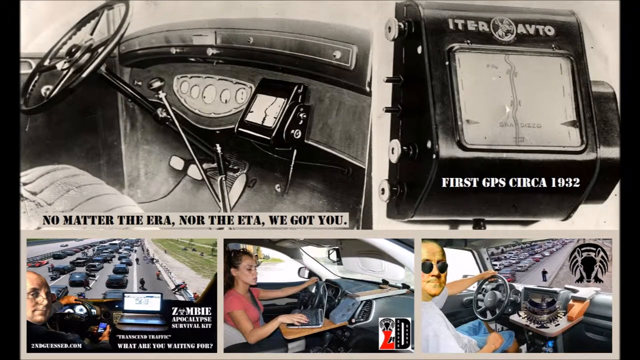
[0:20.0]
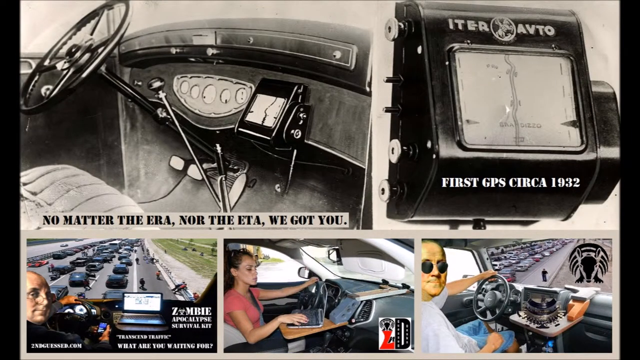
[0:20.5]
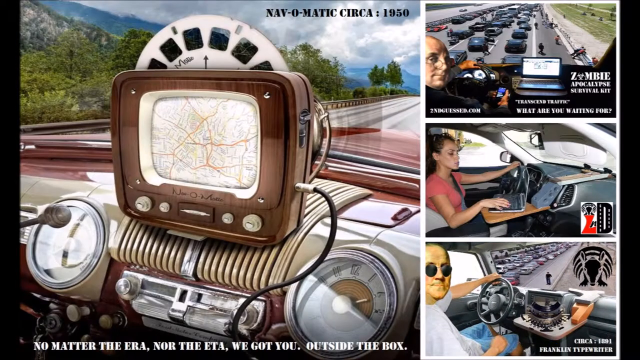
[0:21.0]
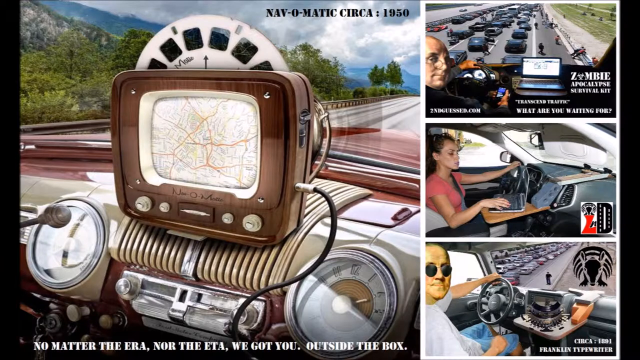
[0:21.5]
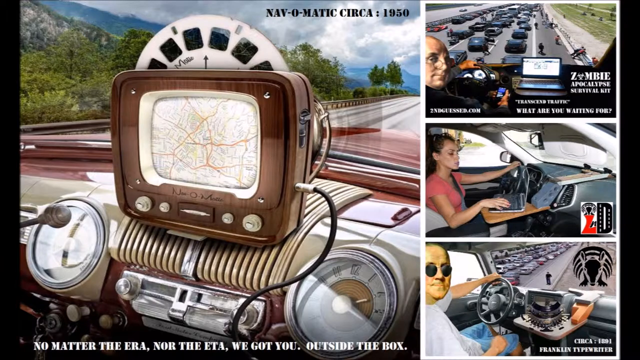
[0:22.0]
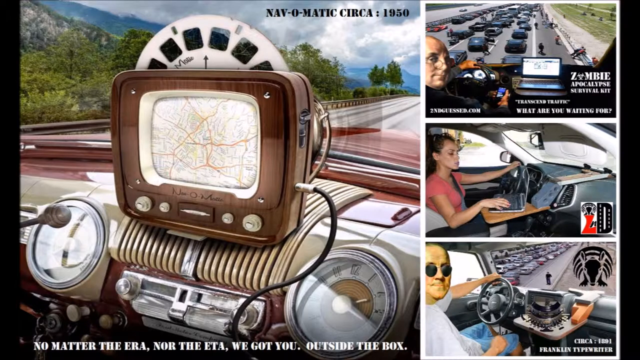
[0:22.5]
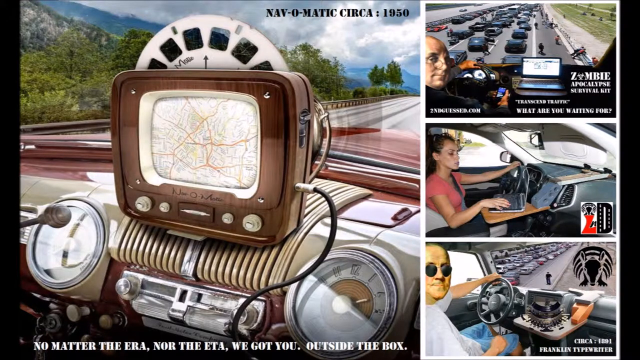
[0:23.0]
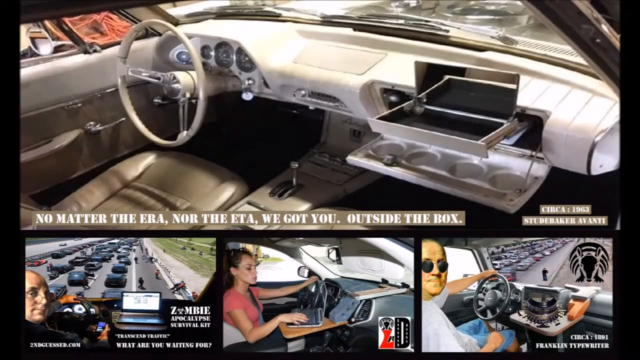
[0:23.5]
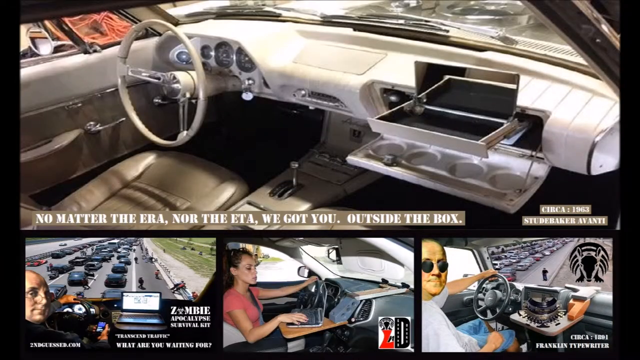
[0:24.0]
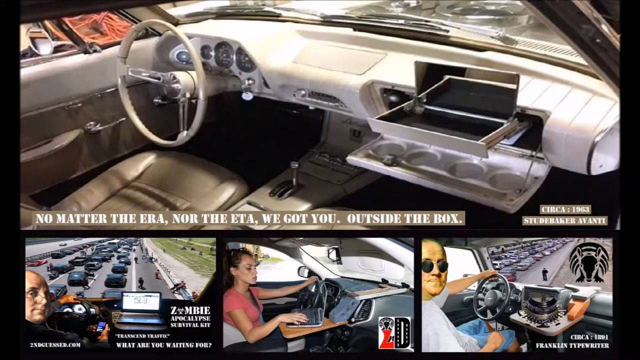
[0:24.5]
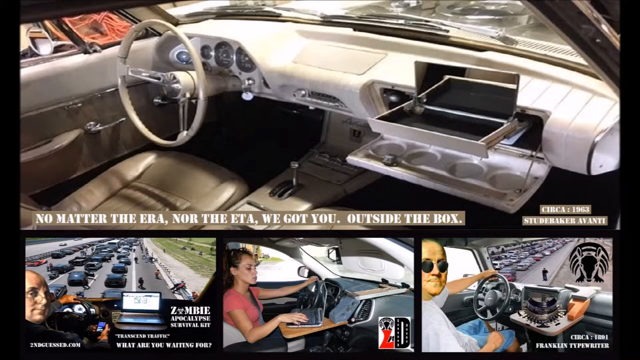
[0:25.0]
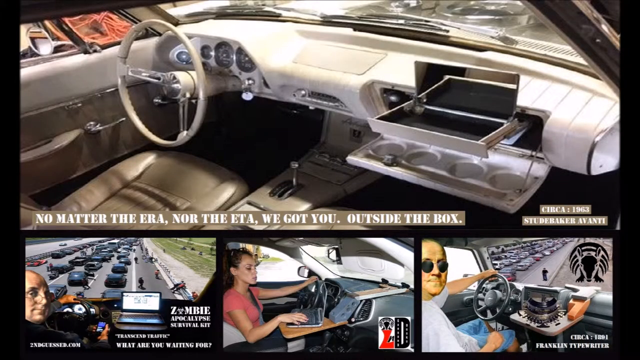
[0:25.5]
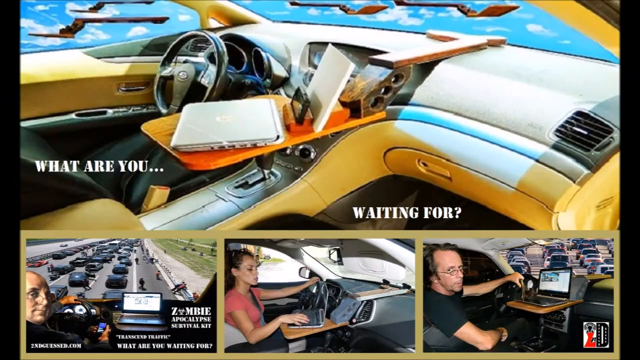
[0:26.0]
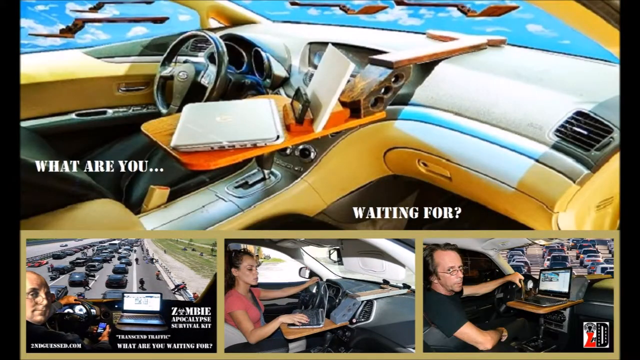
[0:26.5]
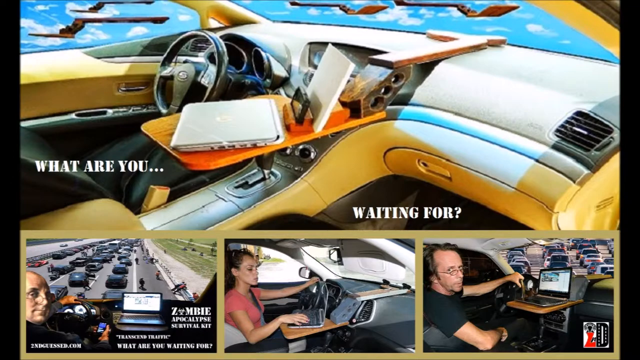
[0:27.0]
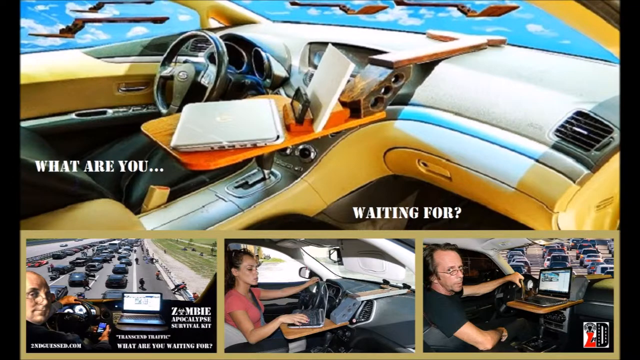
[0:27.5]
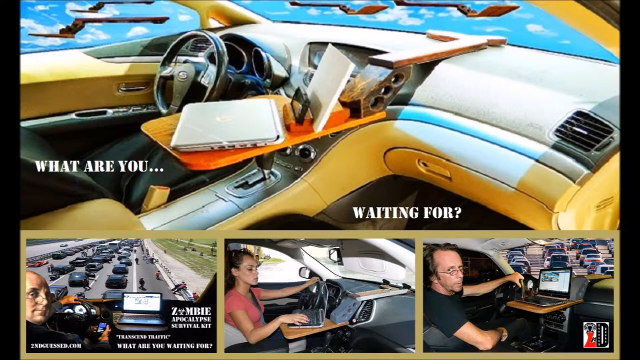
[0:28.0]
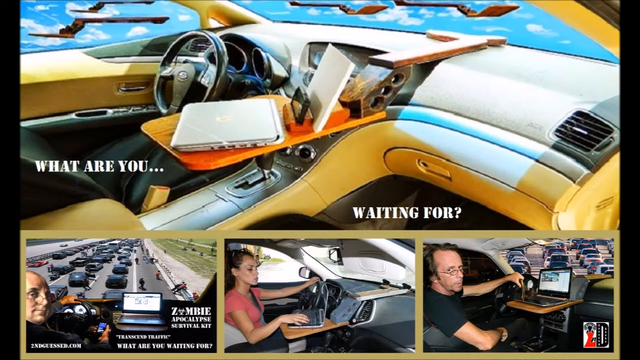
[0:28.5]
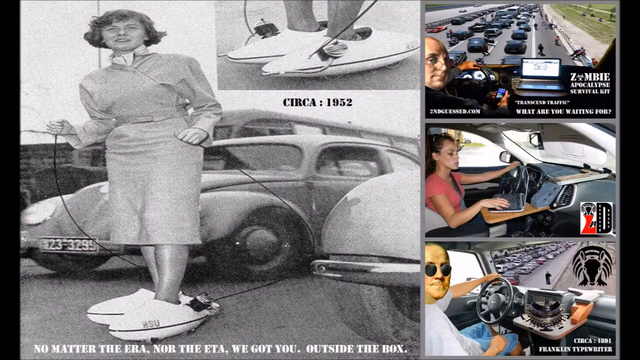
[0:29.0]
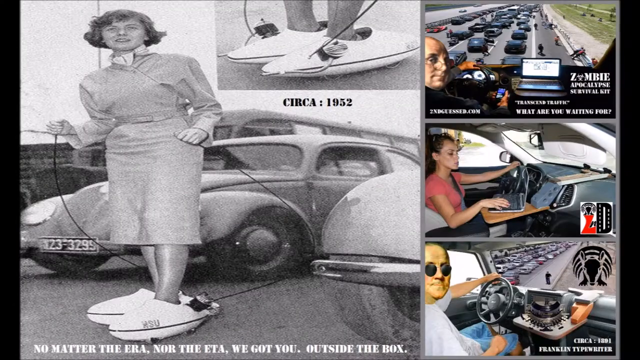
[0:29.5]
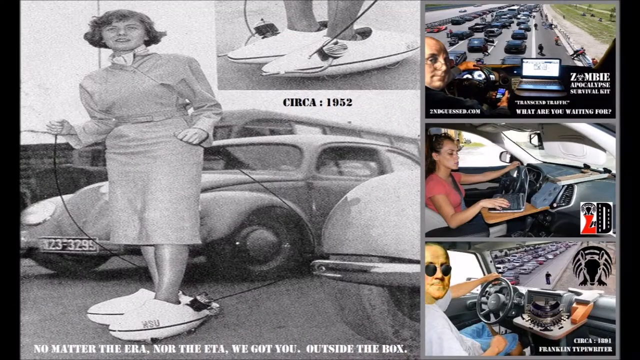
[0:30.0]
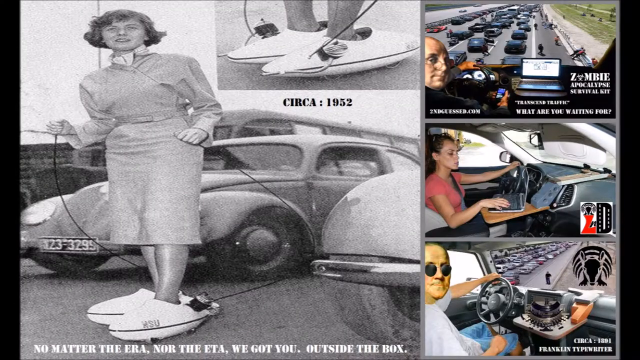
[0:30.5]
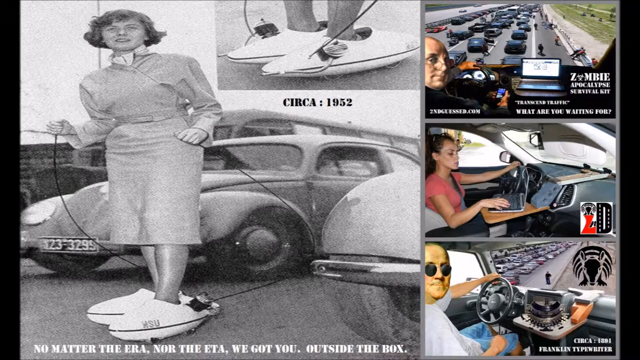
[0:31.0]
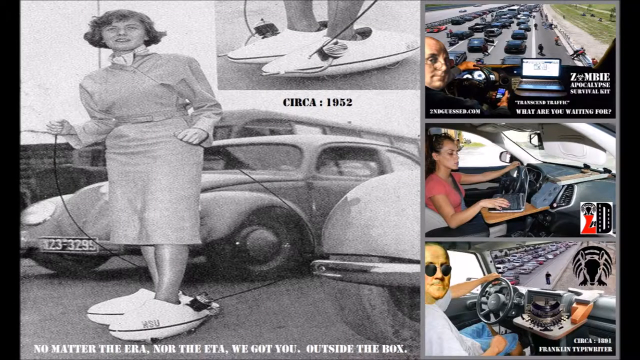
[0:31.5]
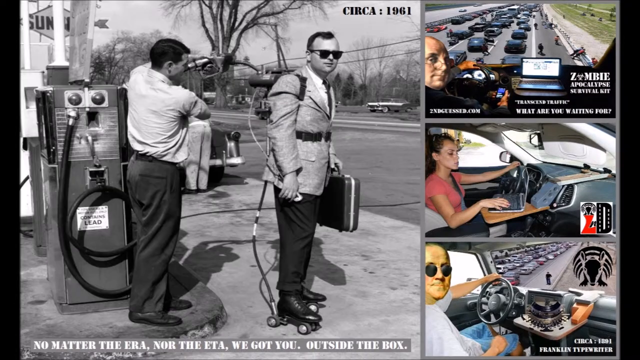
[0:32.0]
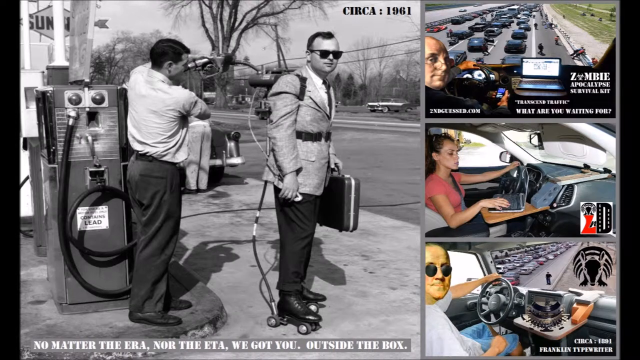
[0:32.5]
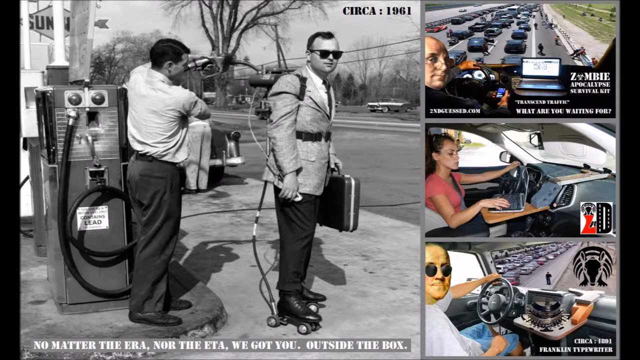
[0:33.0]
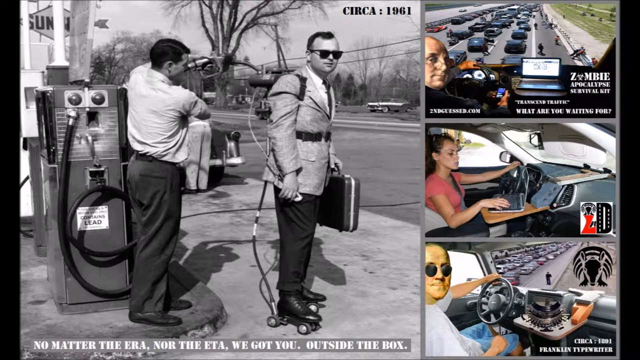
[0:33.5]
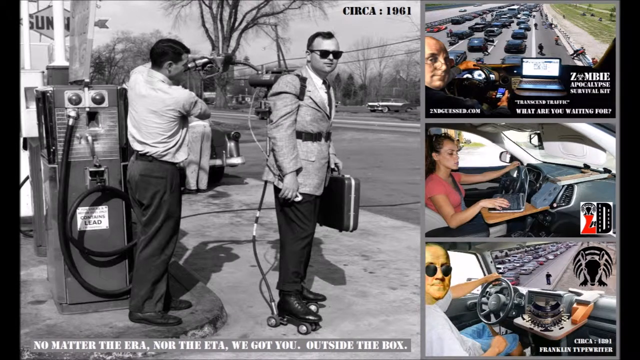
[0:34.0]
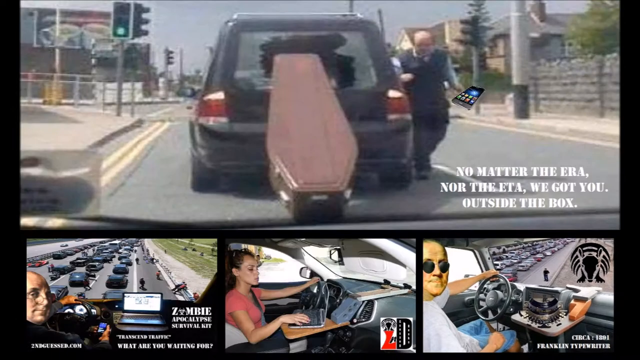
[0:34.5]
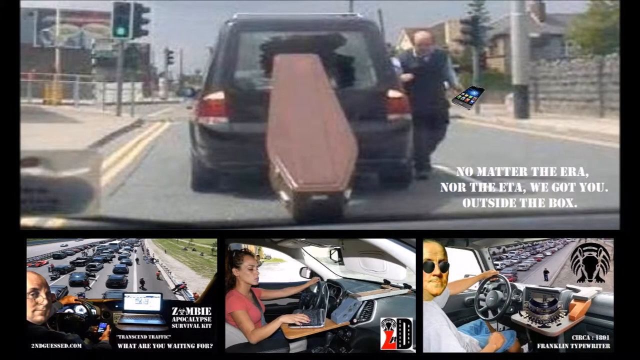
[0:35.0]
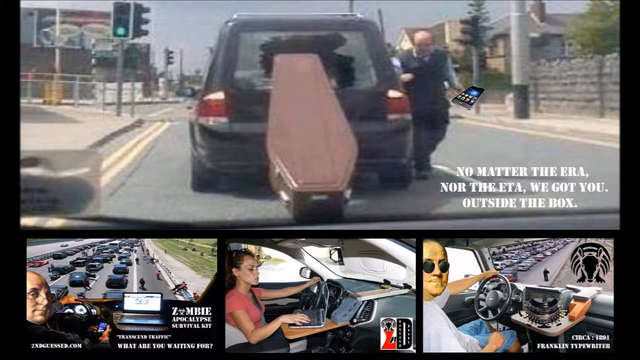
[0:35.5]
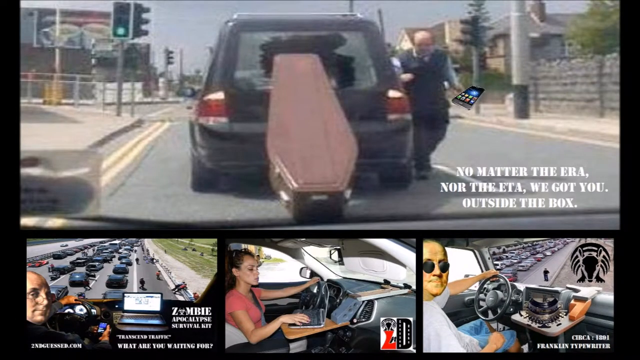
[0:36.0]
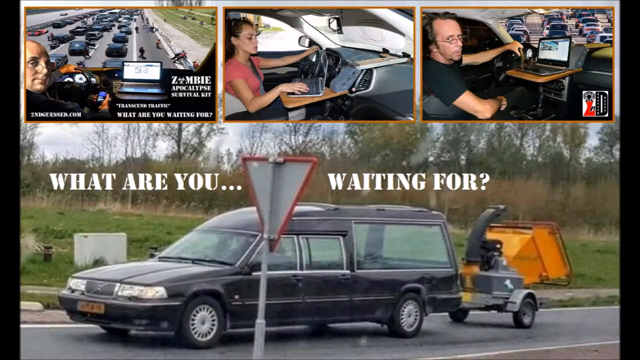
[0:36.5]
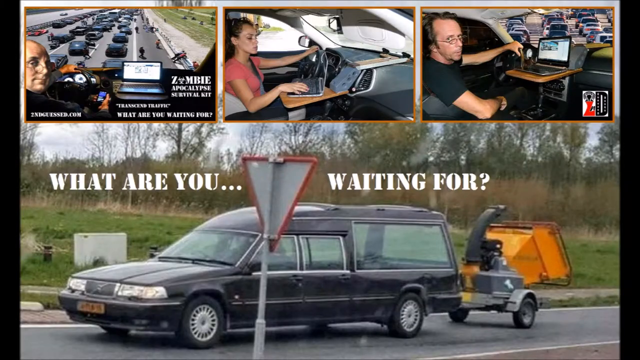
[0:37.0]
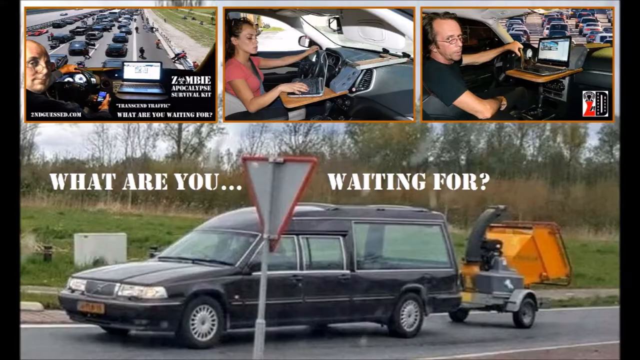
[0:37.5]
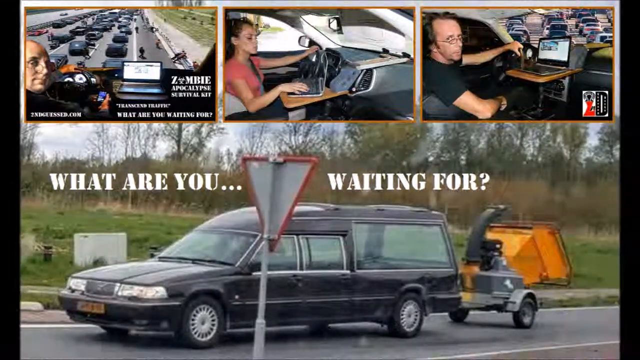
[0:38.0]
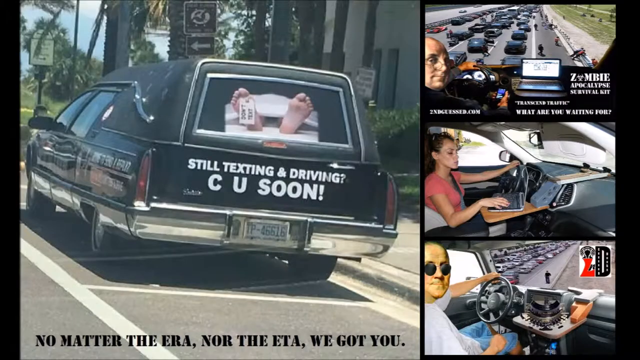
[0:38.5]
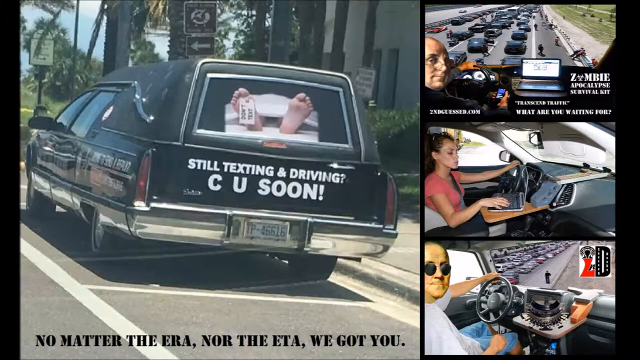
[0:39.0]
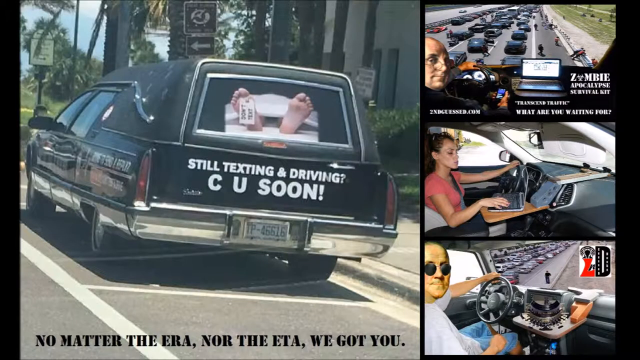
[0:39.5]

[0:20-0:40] The images continue with an old-style radio on the dashboard of a car. A car apparently from the 1960s looks quite modern for its time, with a huge glovebox. Another car, apparently from the 1970s, has lots of moulded plastic around the dashboard and looks very futuristic for its time. The next image is labelled "circa 1952" and shows a black-and-white photo of a woman dressed in the styles of that time, standing in front of a Volkswagen Beetle and wearing shoes that look as though they have their own motors. A jetpack follows with a "circa 1961" title, also in black and white; the man wears a sports jacket, smart trousers and shoes. Next is the aftermath of a crash in which a funeral hearse has pulled up too quickly and the coffin has flown out of the back window. Another hearse has a piece of gardening equipment, a chipper, attached to the back. Then a hearse shows the inscription "still texting and driving, see you soon" on the back, along with a corpse's pair of feet.